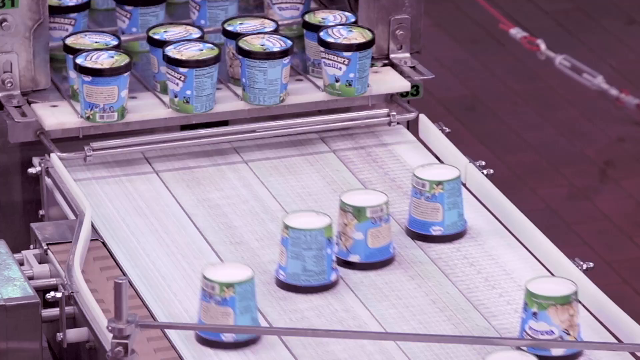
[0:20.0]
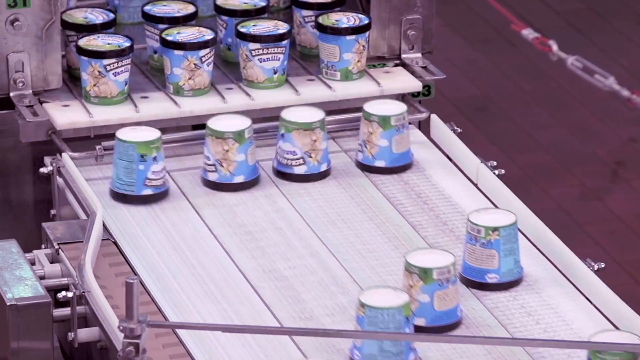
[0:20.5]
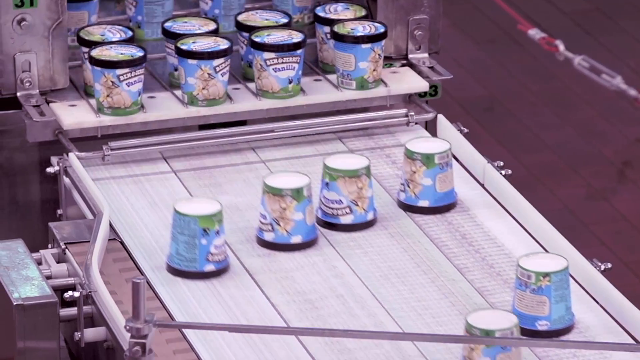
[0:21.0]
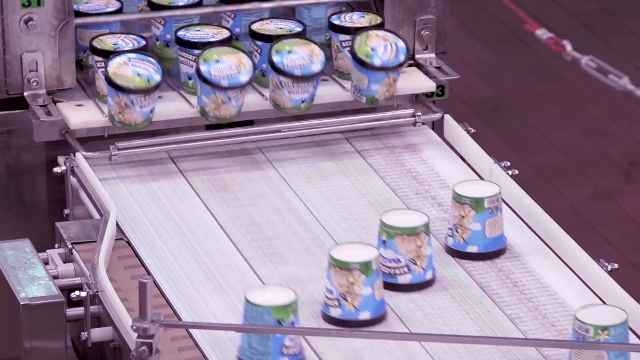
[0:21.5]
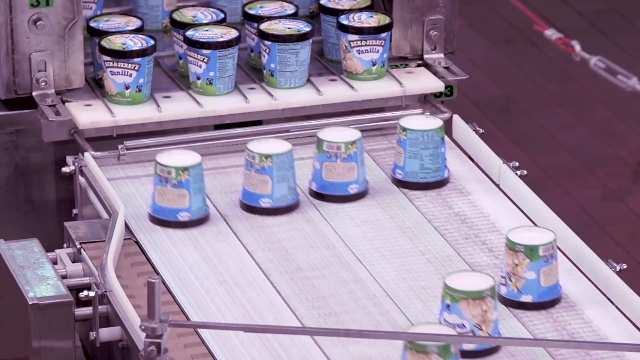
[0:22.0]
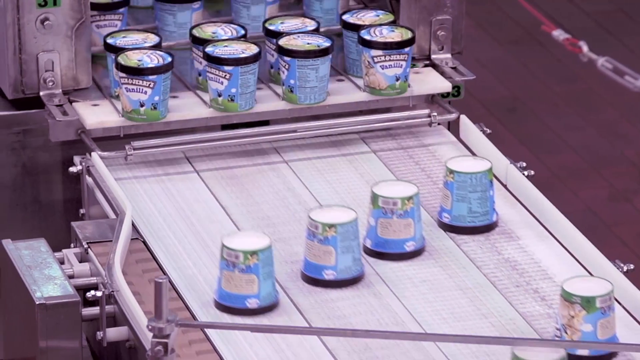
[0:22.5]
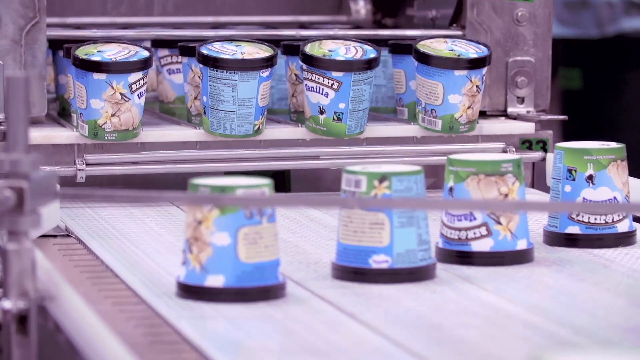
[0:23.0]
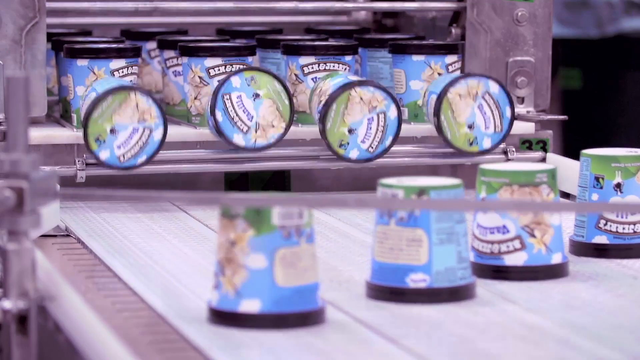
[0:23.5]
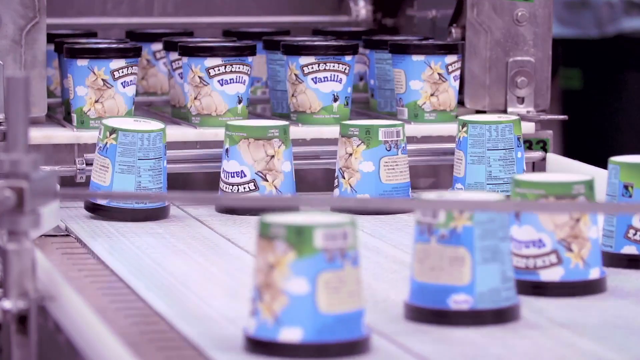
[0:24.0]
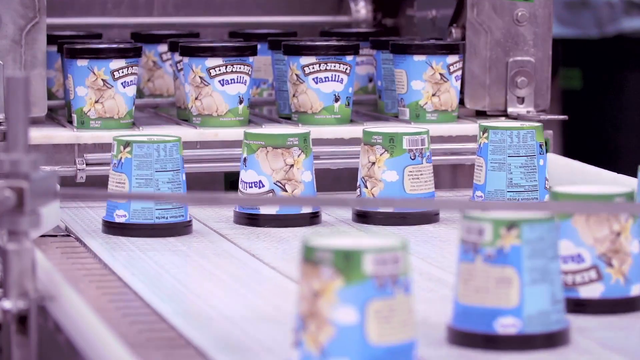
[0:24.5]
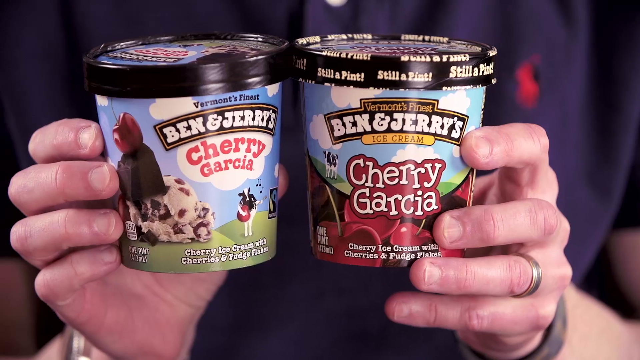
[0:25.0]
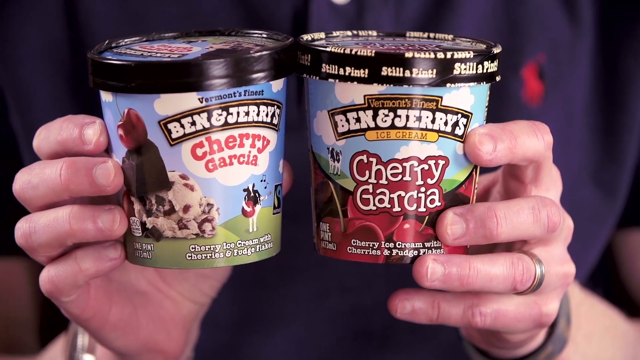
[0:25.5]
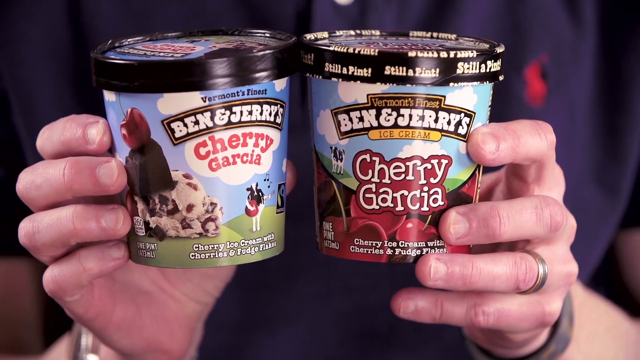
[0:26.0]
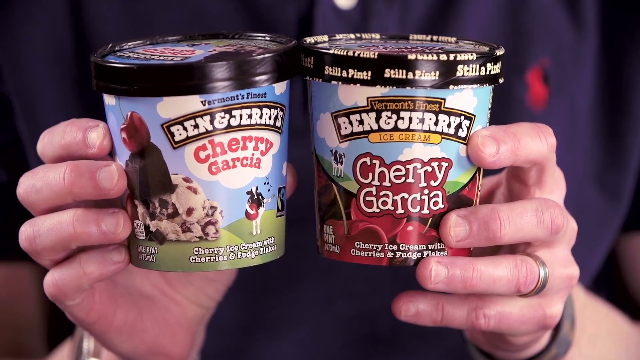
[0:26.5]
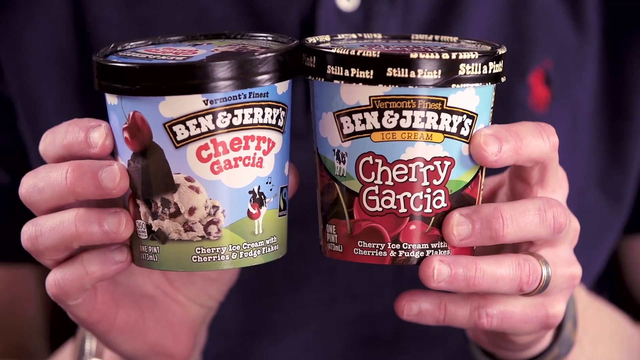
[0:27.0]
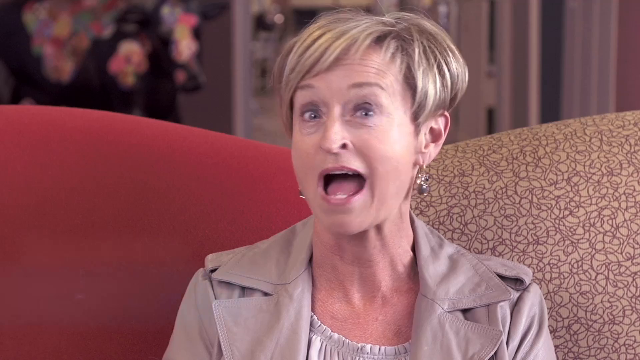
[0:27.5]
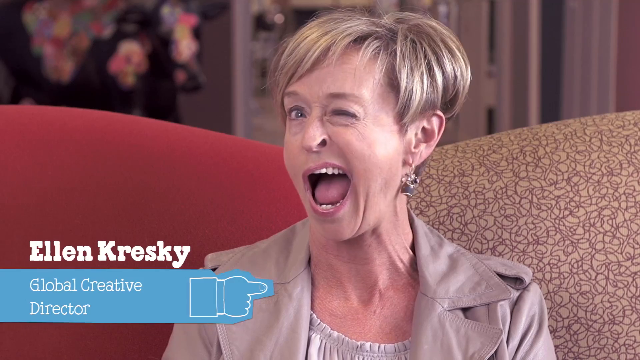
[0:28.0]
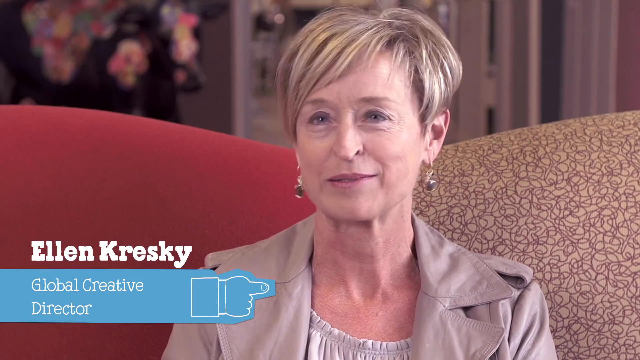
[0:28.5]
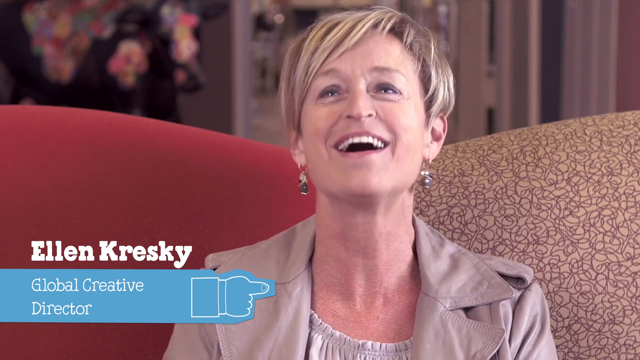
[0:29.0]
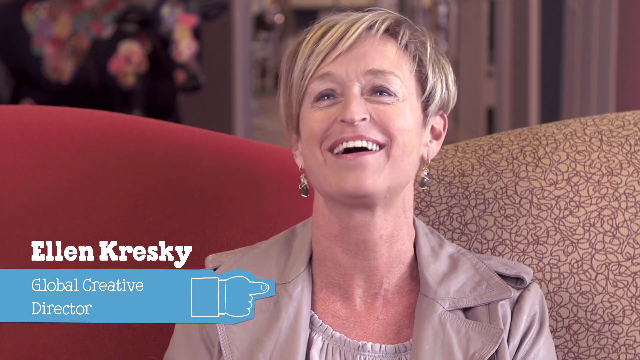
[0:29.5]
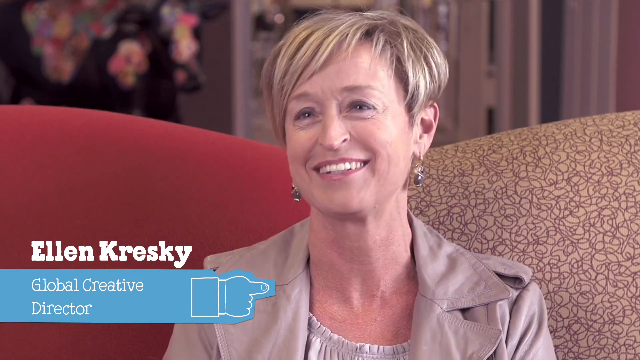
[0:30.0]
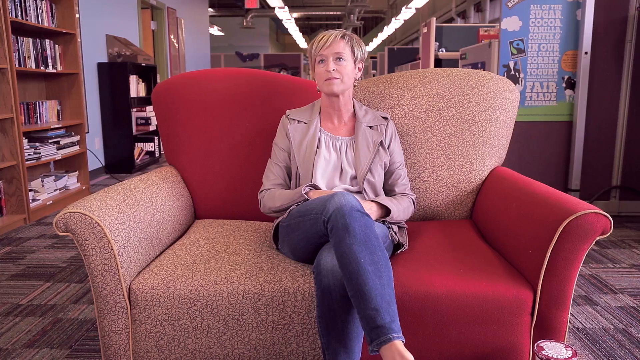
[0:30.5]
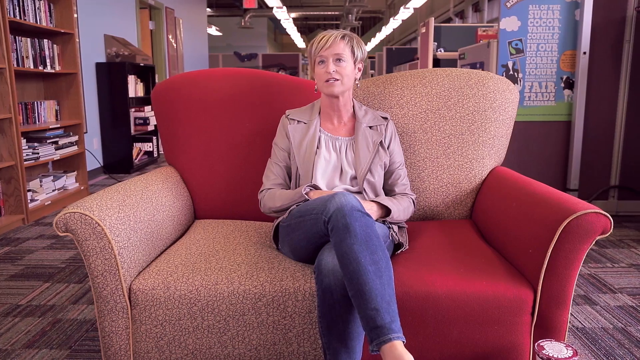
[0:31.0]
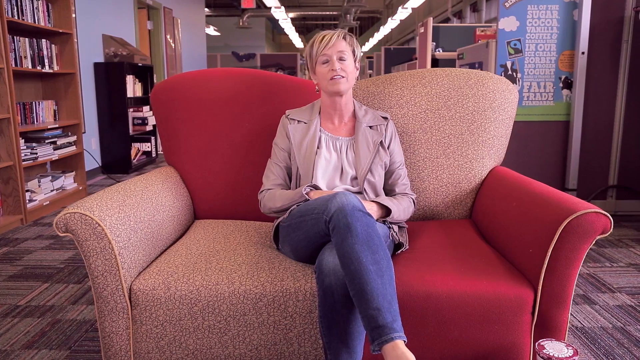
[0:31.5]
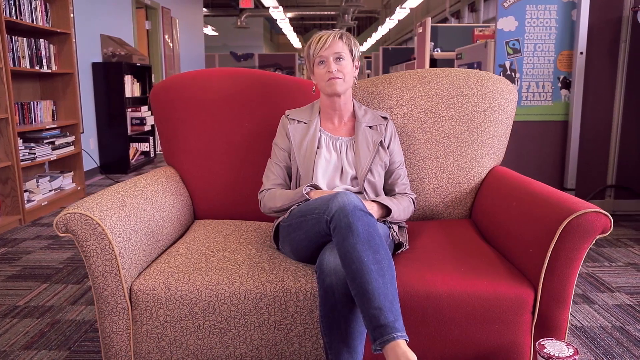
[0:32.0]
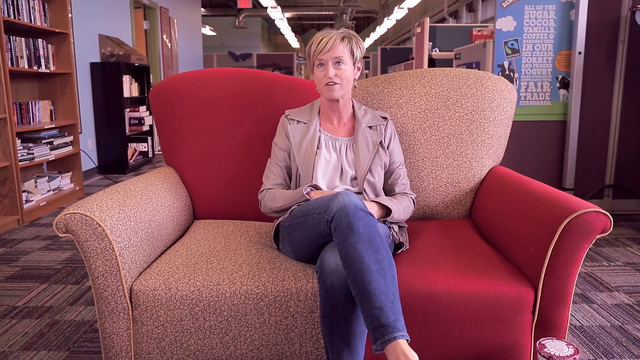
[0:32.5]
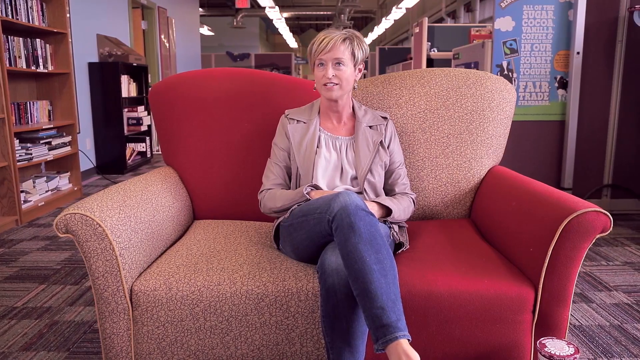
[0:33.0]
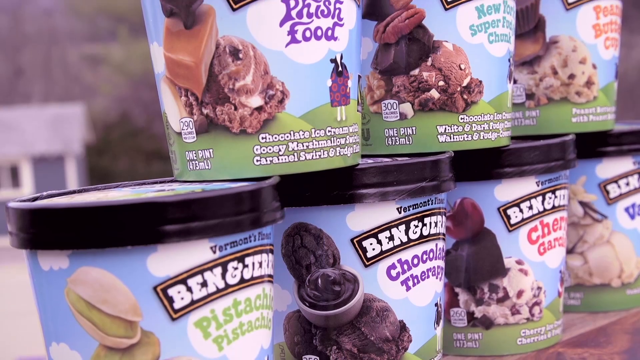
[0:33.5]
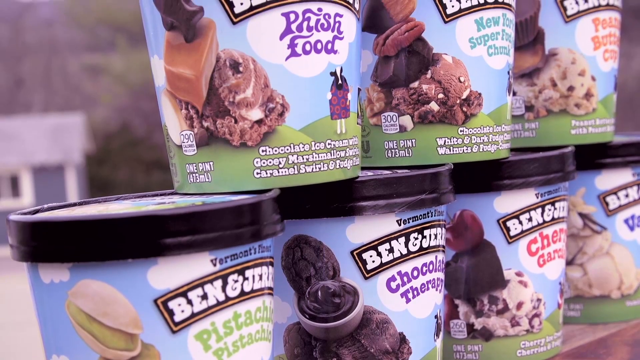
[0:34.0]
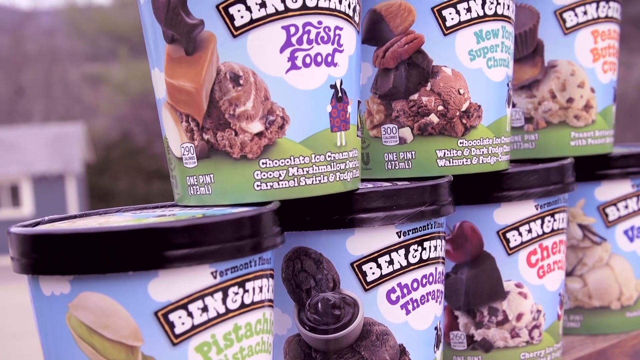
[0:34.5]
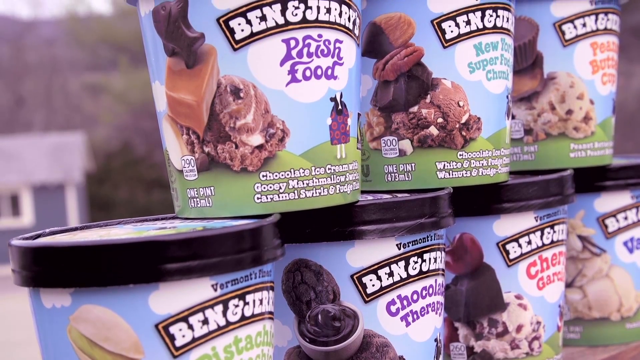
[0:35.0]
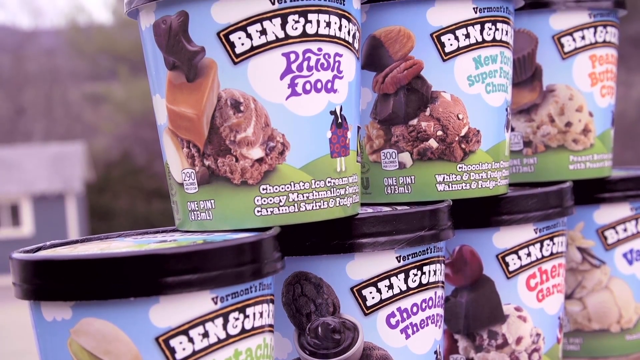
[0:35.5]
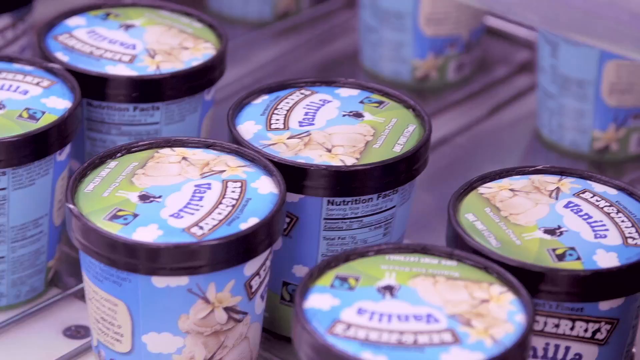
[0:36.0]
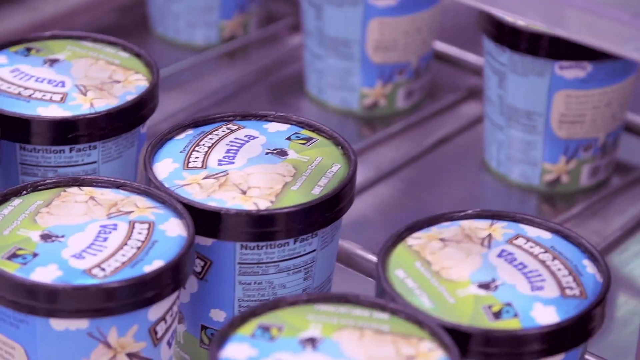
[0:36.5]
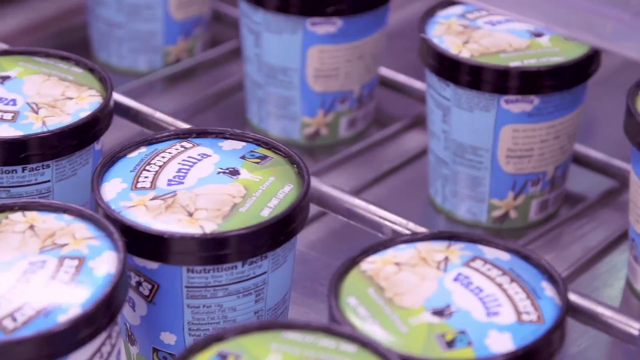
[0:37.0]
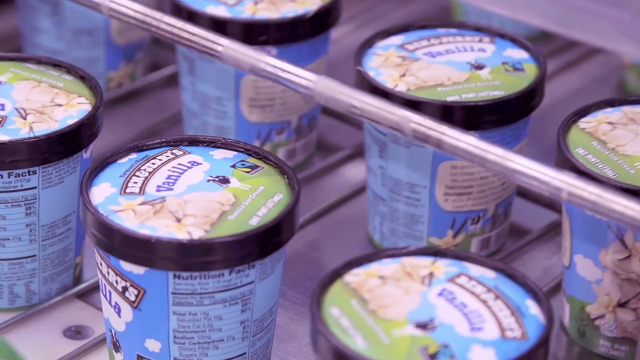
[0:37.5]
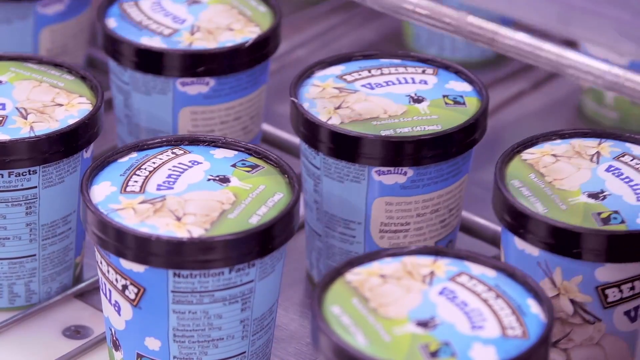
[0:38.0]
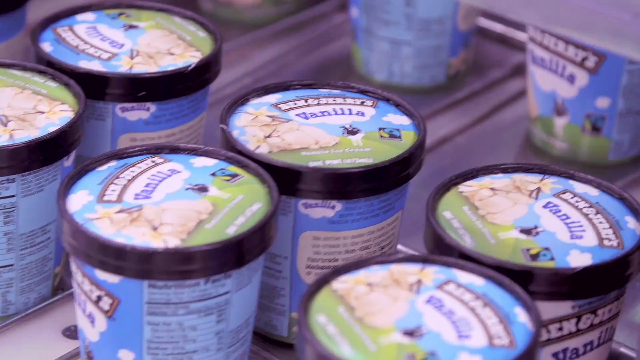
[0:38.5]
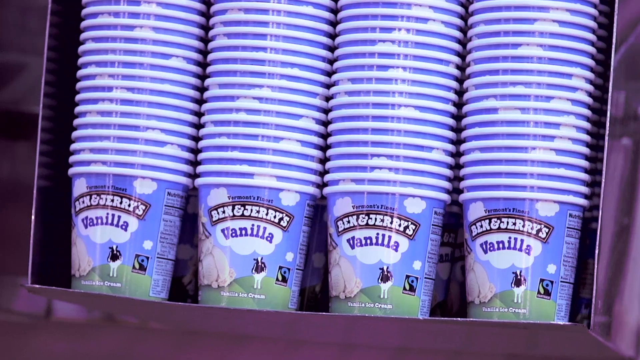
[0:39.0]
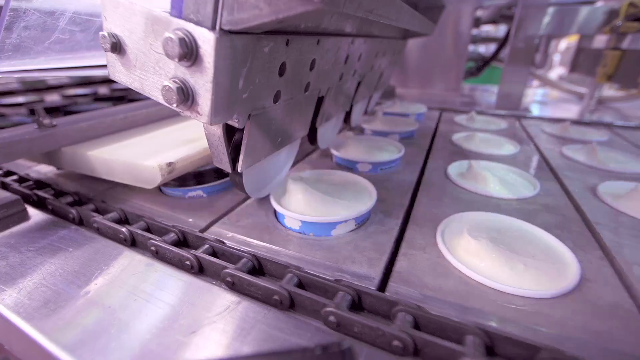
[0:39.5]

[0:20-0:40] Someone holds a pint of Ben & Jerry's New York Super Fudge Chunk ice cream in their right hand. The person is Caucasian and wears a purple shirt and a white t-shirt. Beneath the words Super Fudge Chunk, the label reads "chocolate chip ice cream with white and dark" followed by fudge and caramel. The label also shows a sky and a black-and-white cow. The pictured ice cream looks like it contains pecans and chocolate, along with white-looking fudge.